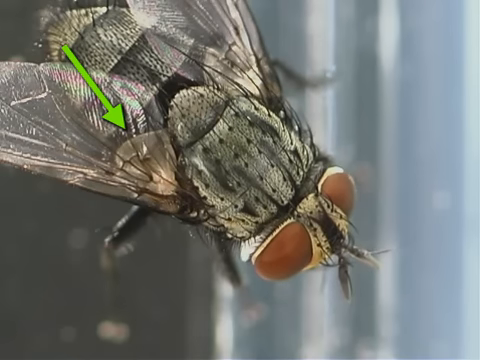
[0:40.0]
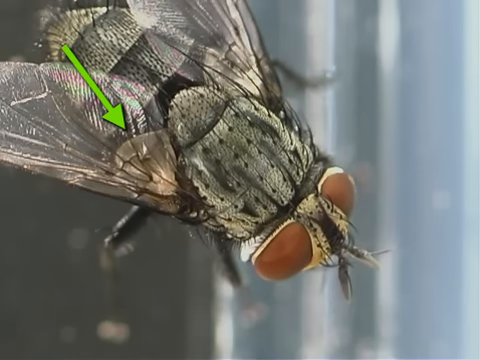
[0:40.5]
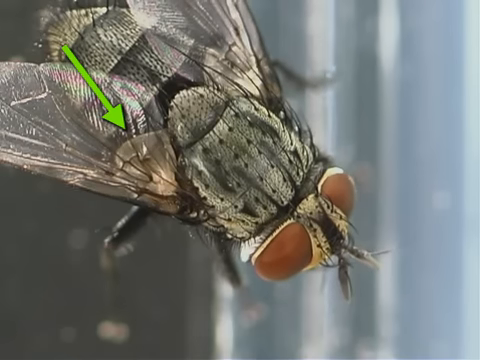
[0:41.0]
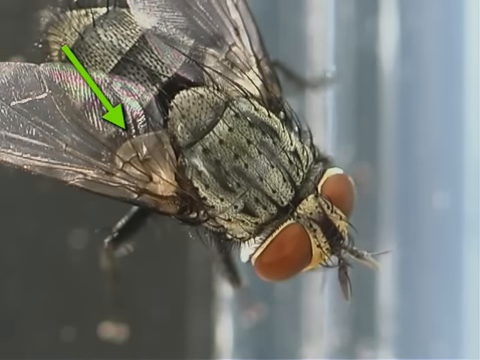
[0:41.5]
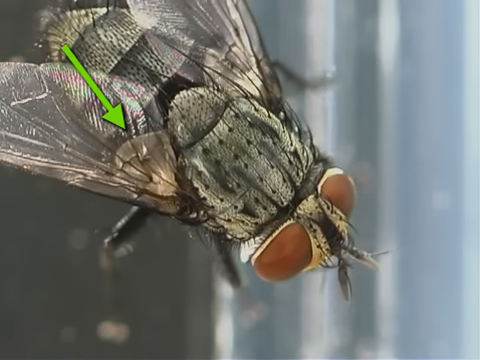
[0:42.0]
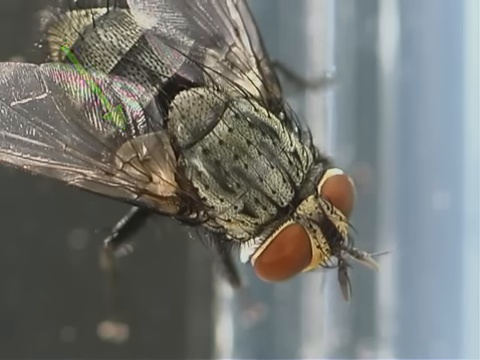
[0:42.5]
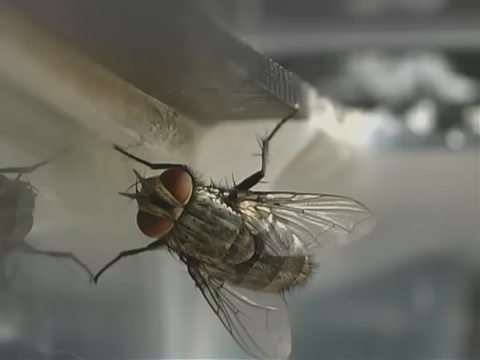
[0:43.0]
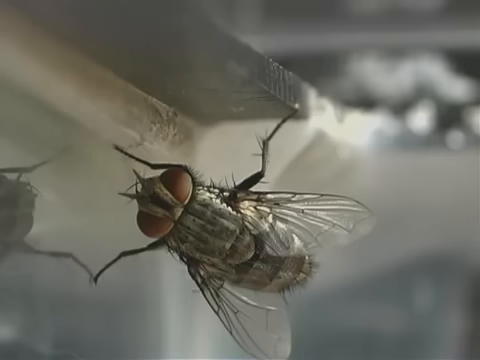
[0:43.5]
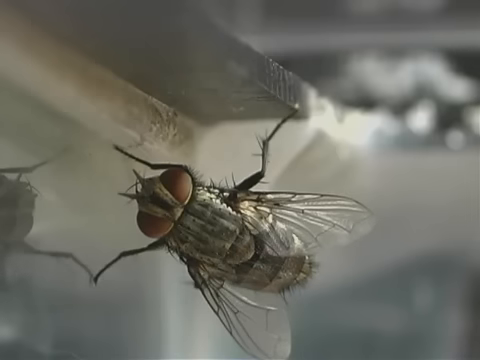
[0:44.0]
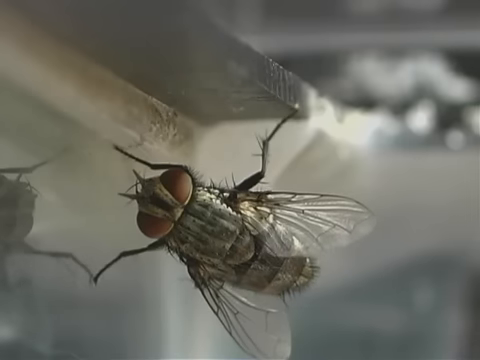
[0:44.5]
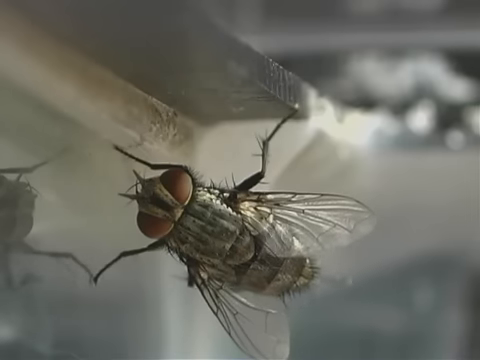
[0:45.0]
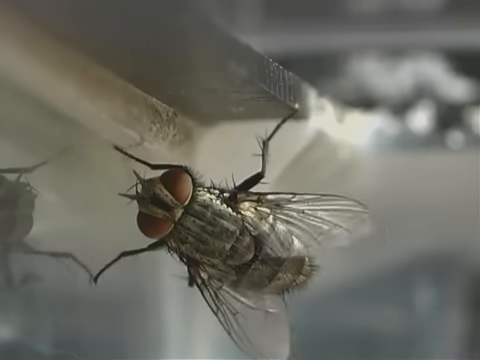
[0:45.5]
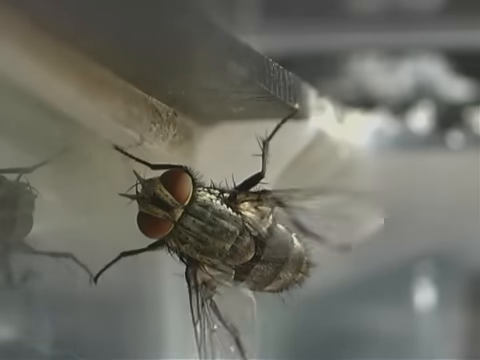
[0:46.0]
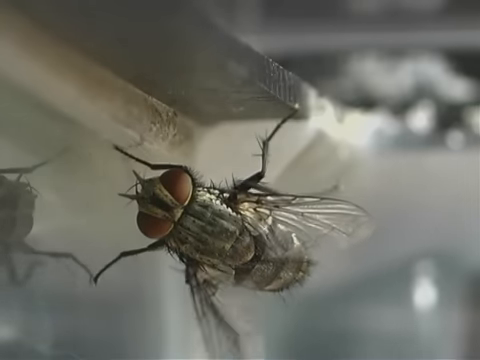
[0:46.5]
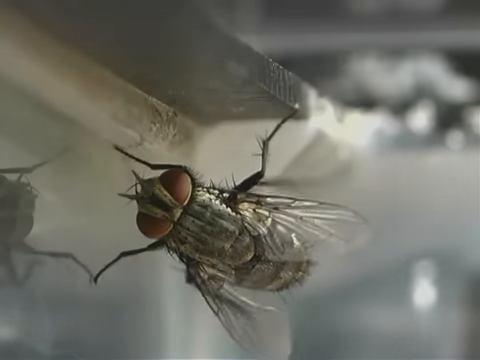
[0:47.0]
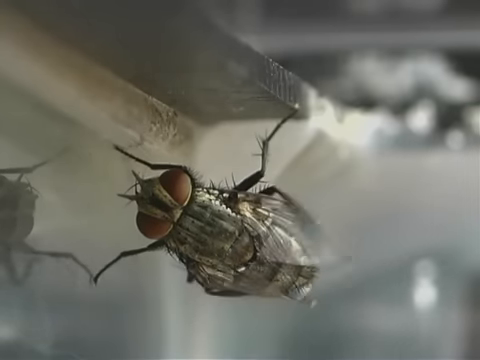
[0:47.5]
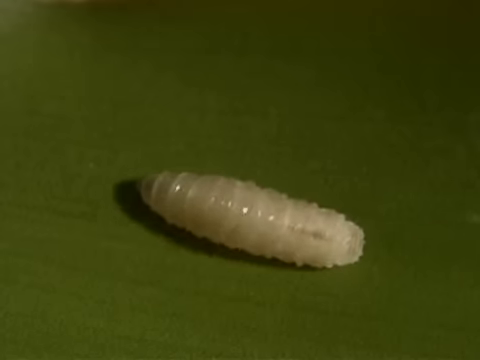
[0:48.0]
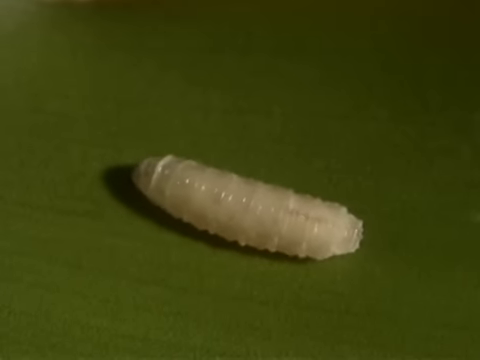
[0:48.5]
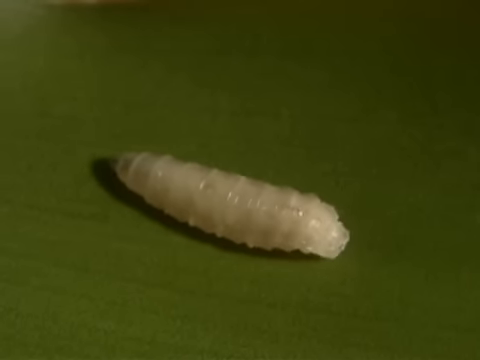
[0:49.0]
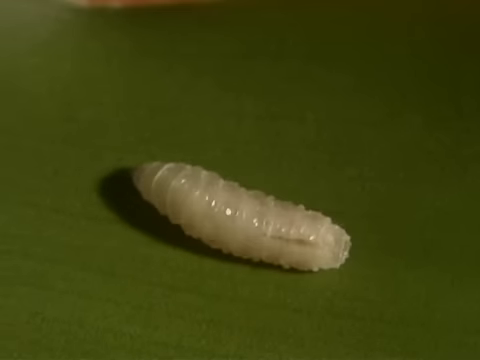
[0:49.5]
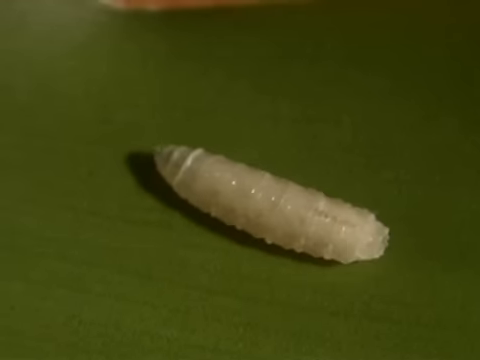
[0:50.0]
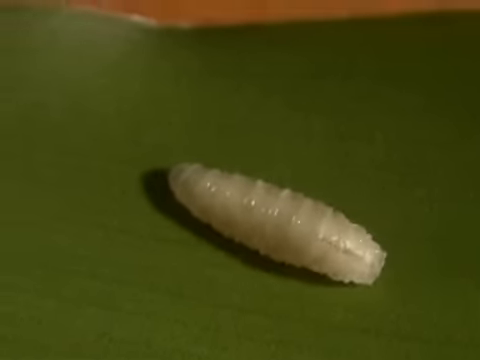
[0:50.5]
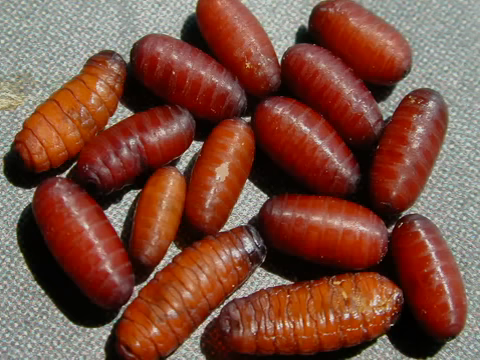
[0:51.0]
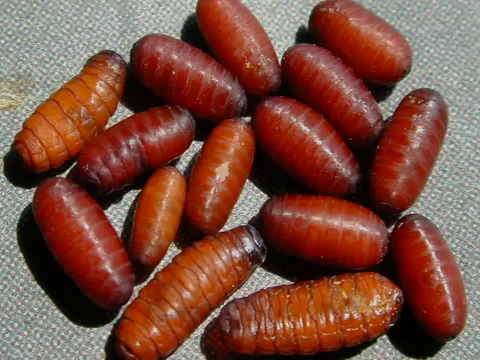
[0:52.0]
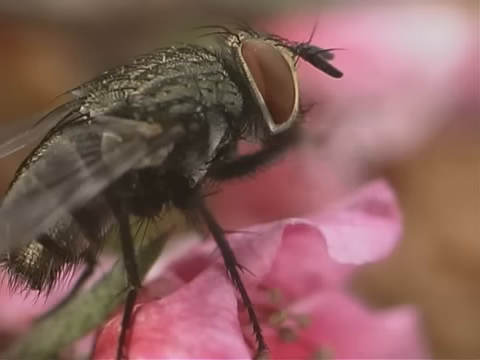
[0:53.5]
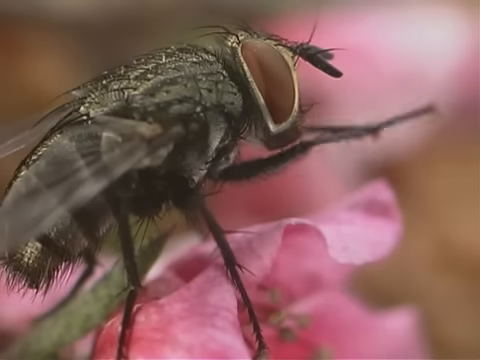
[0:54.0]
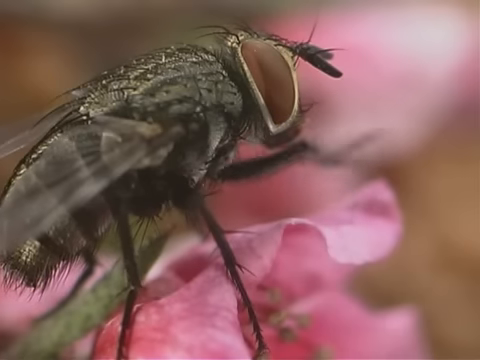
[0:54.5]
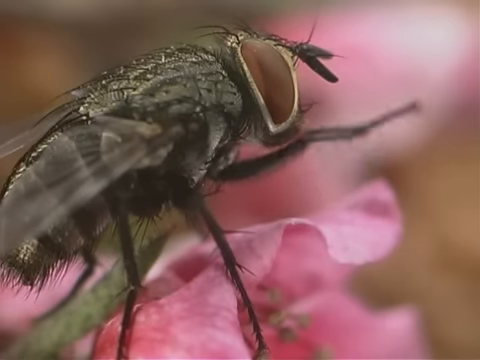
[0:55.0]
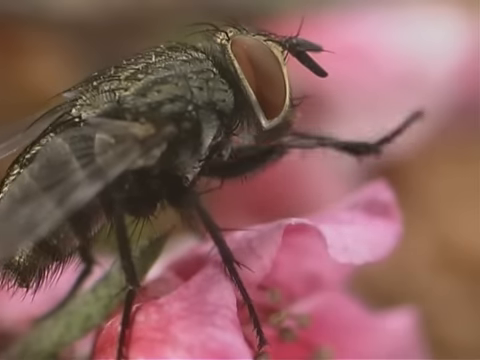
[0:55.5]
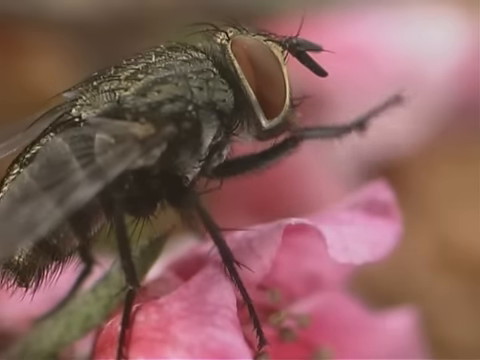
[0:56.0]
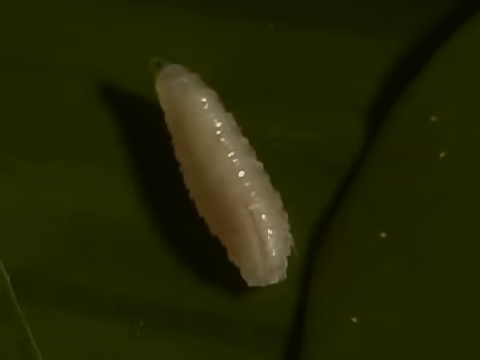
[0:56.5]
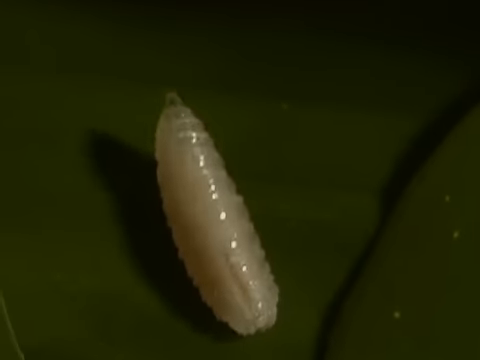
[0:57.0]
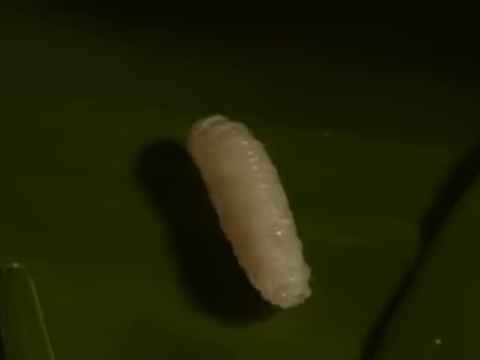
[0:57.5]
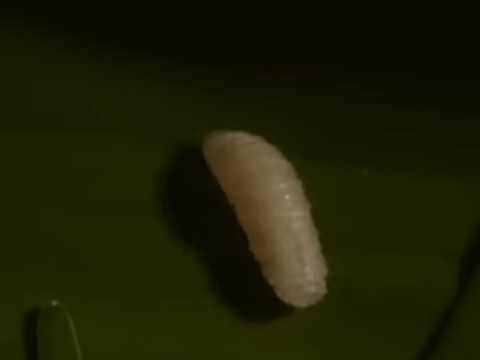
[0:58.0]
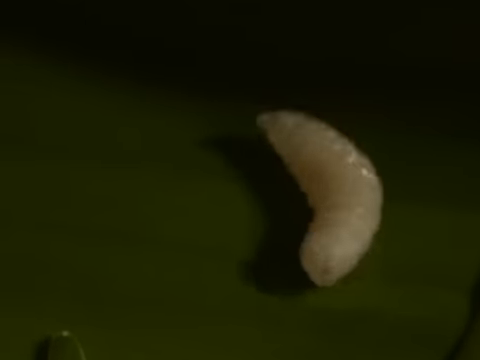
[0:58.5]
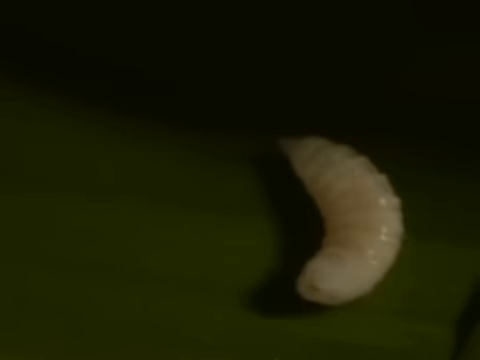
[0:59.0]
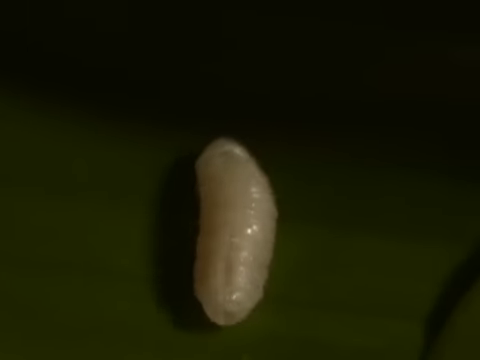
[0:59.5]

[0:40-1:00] A fly is on screen with a luminous green arrow pointing to part of its wing. The fly has two small antennae, two big orange eyes, and three body parts: the head, the thorax and the abdomen. There are black dots on the middle section, which is a light green colour. The fly is very close up and magnified, showing two transparent wings and three sections to the abdomen. The fly moves its back legs, which look like they are rubbing against its two wings, while its front legs support it, spread quite wide apart. It appears to be under a grey window frame, and part of the fly's reflection is visible in the window. A white maggot moves along what looks like a green leaf or a green table. A group of about 17 red maggots appears, none of them moving. The video then goes back to a fly sitting on a pink flower, rapidly rubbing its two legs together. Next, a maggot appears to be crawling across a green leaf.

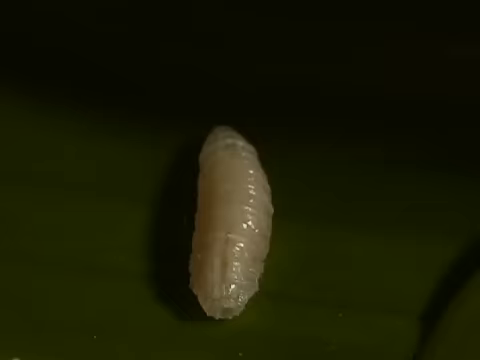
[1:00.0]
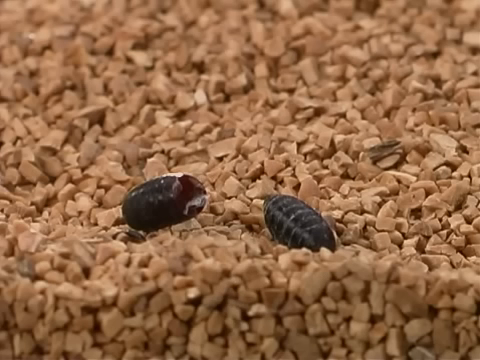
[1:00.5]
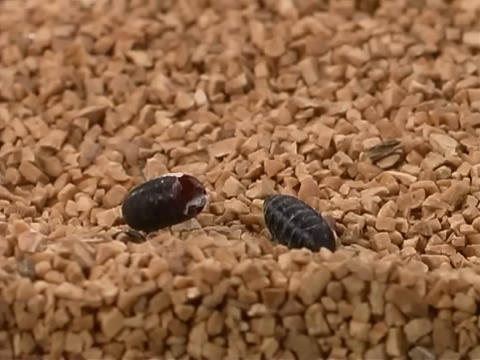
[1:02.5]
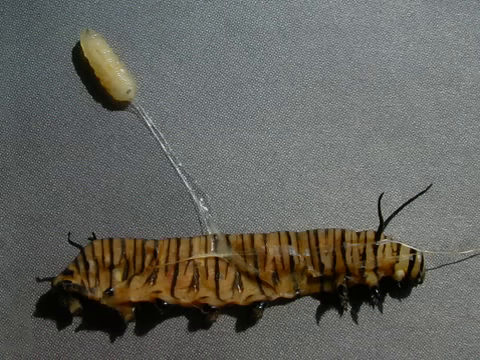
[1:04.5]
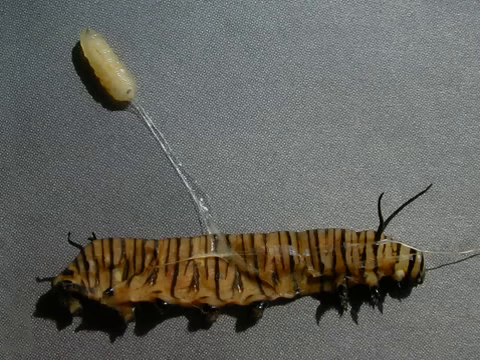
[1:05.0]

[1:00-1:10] A maggot appears to be on a green leaf. It is short, dumpy and very white, and looks like it is made up of little sections. It moves very slightly before the video jumps to the maggot's carcass, which is black with white stripes and has a hole where the maggot came out. The carcass sits on some tiny orangey stones. At the bottom of the screen is what looks like a tiger-printed caterpillar, yellow with lots of black stripes. A maggot is coming from the caterpillar, along with some clear liquid that looks like it is coming from the back of the maggot and is attached to where the maggot has crawled from the caterpillar.